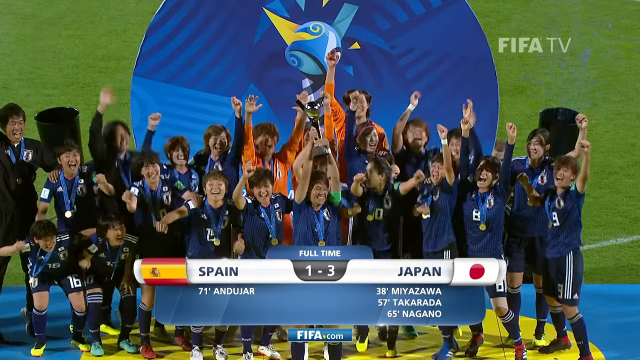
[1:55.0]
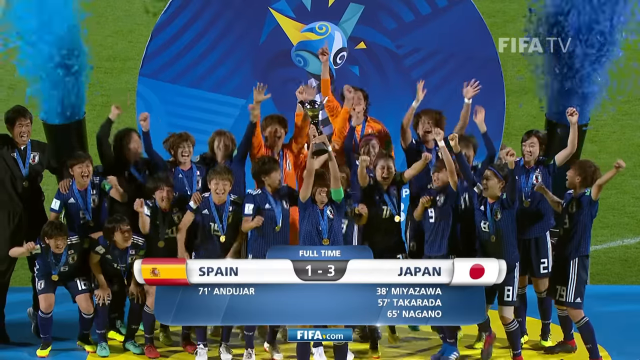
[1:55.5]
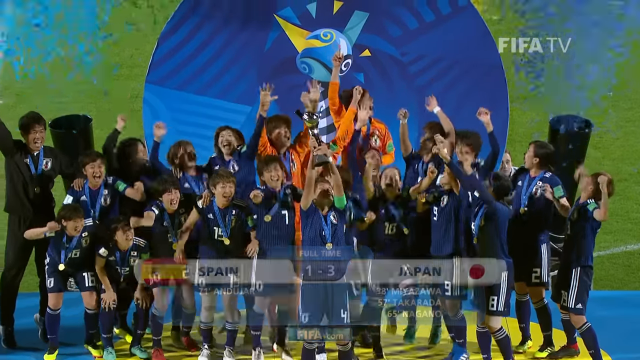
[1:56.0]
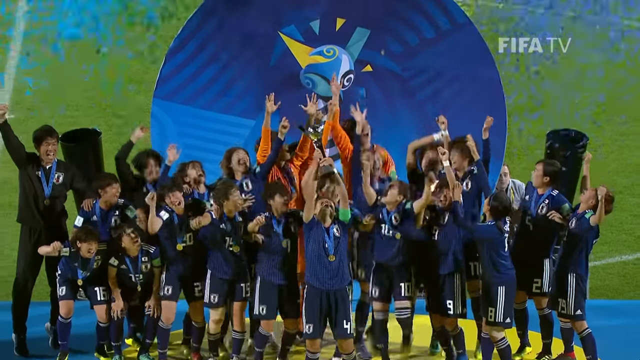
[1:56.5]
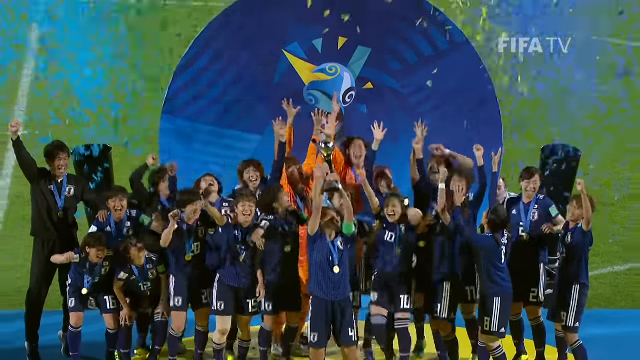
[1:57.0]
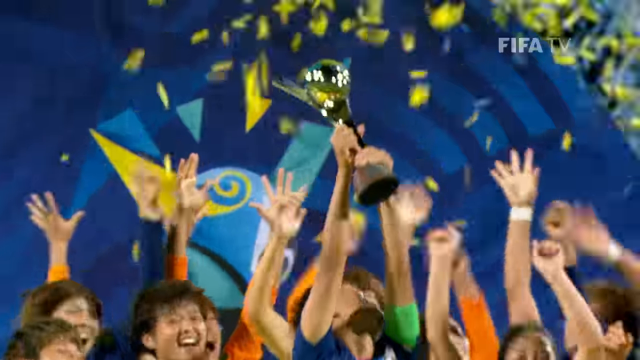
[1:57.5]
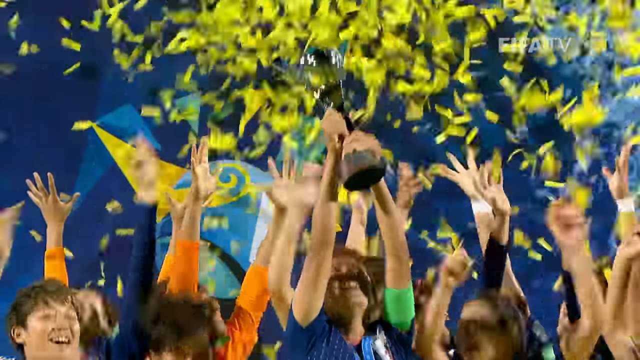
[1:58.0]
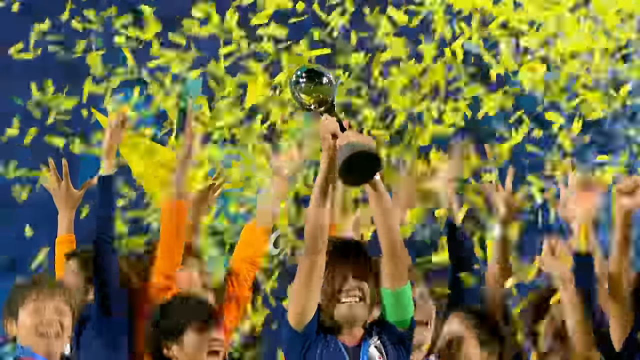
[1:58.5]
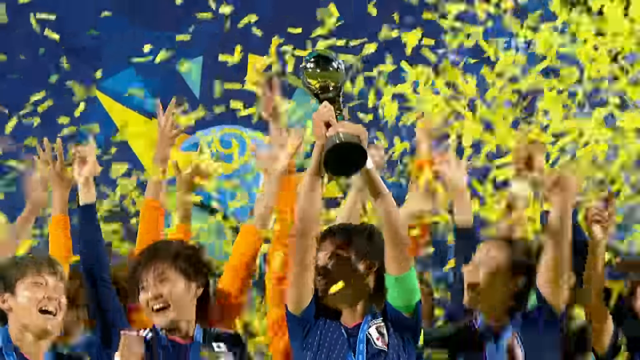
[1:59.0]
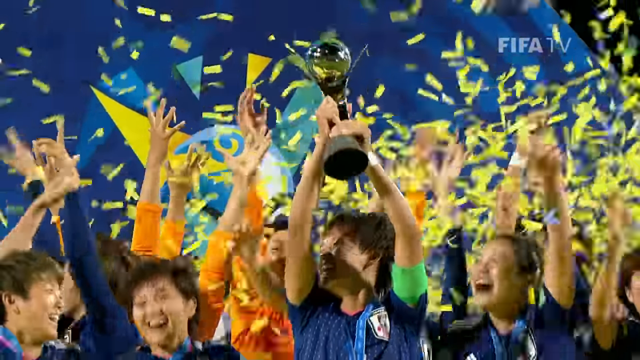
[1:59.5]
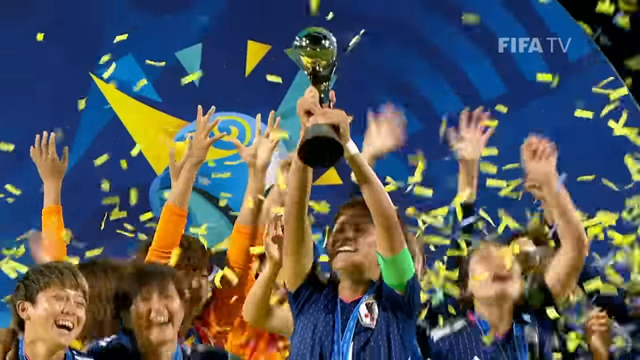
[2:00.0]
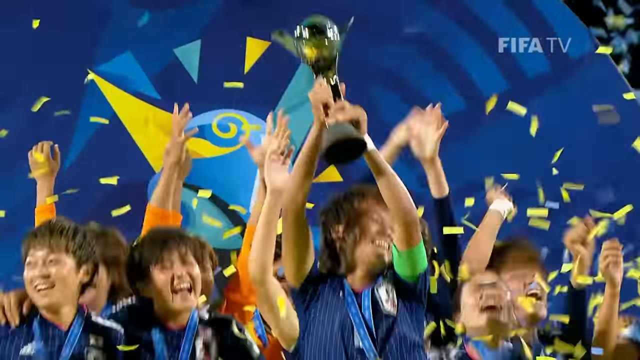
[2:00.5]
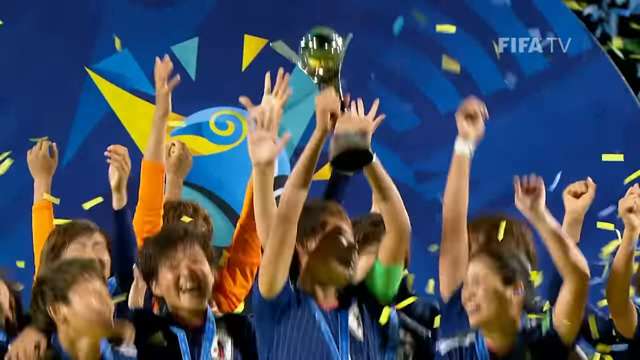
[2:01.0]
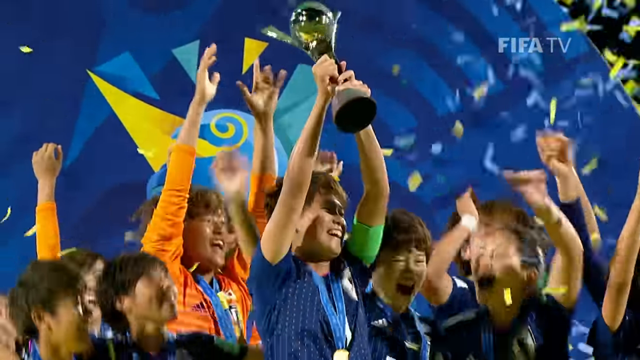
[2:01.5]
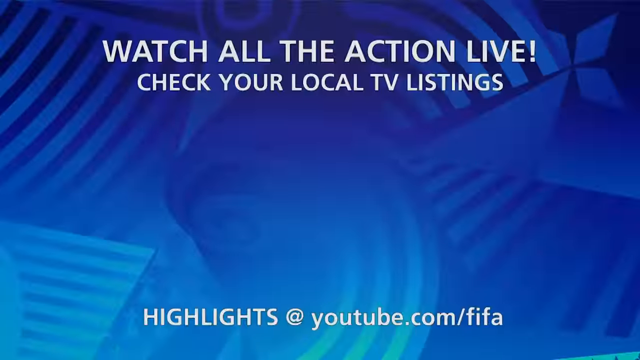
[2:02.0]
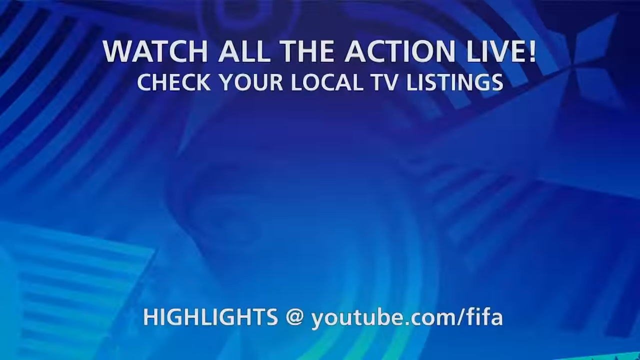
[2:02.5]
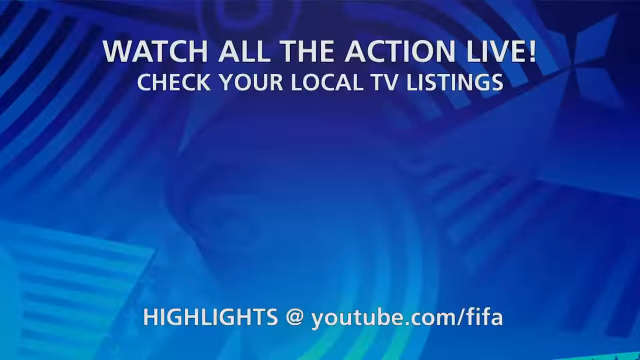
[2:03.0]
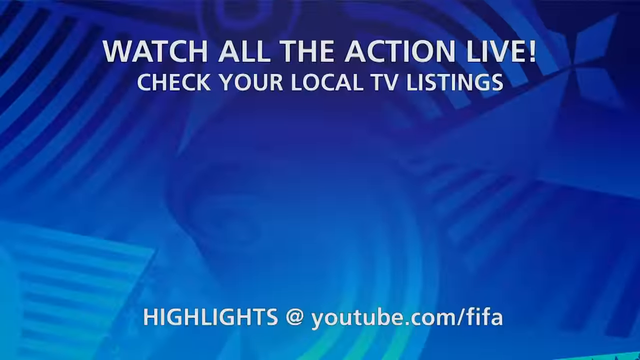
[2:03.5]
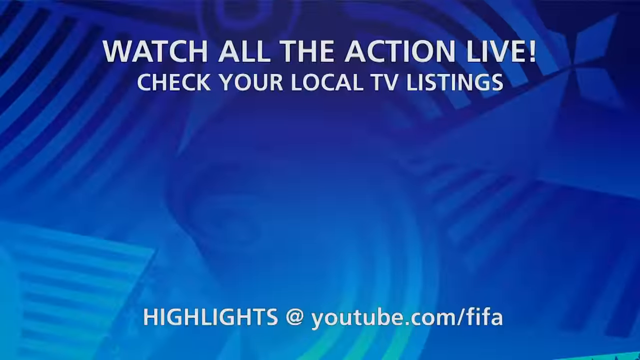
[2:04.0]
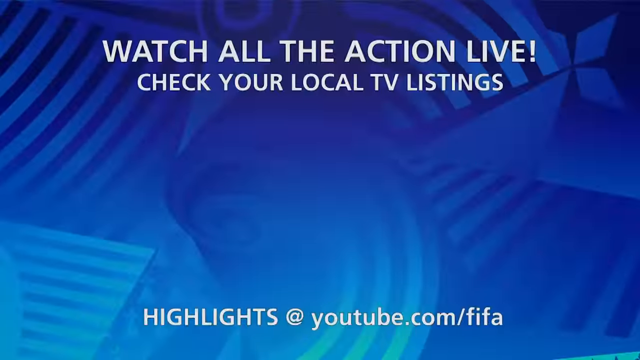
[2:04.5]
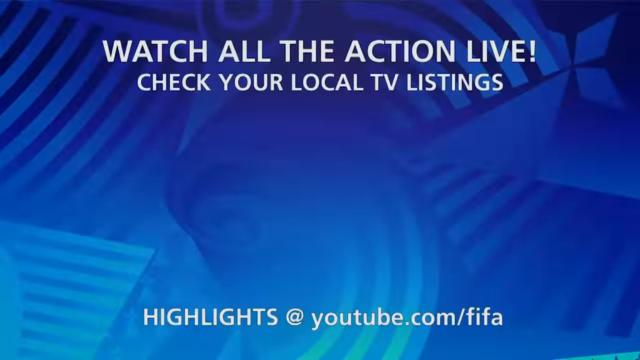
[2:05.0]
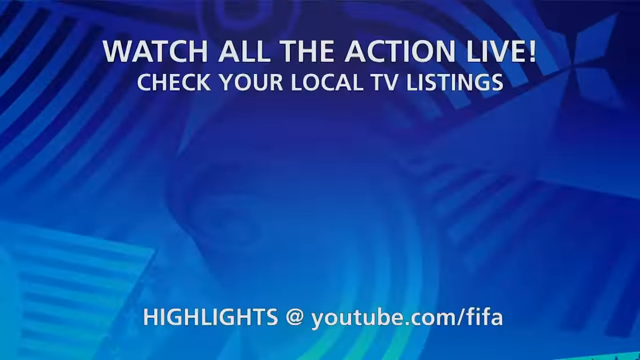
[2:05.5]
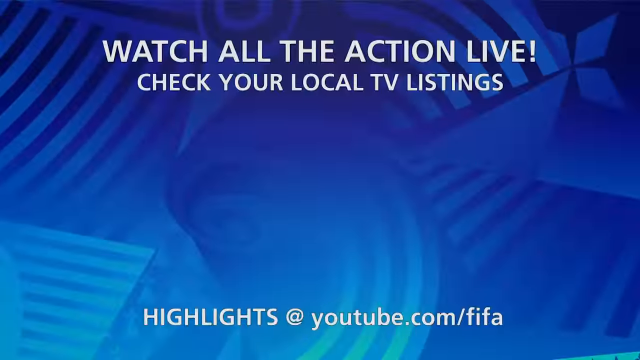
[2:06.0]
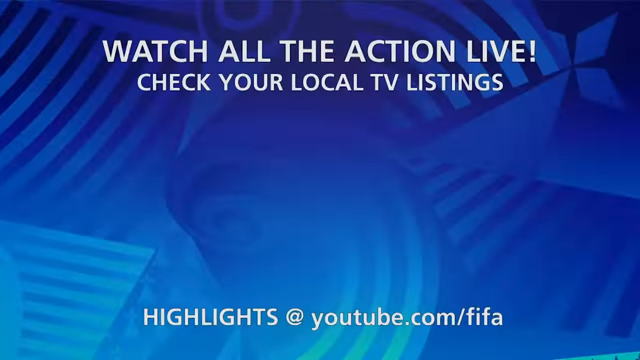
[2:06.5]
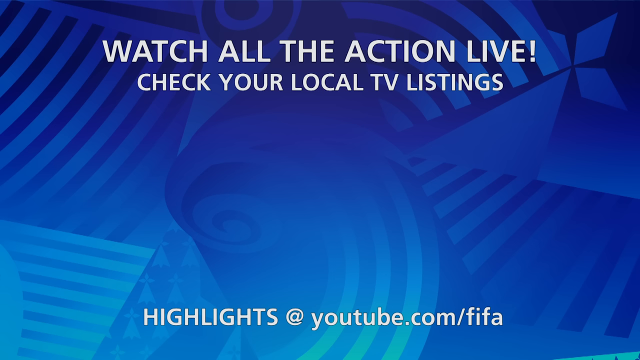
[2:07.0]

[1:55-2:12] A highlight reel of the 2018 FIFA Women's World Cup, Spain versus Japan, in which most of the footage is action on the field: Japanese or Spanish players scoring goals and the goalie blocking shots. The game is in a rather small stadium with typical advertisements along the wall. The final score is Japan 3, Spain 1. The final scene is the Japanese players all grouped together, jumping up and down with confetti coming out of the sky.